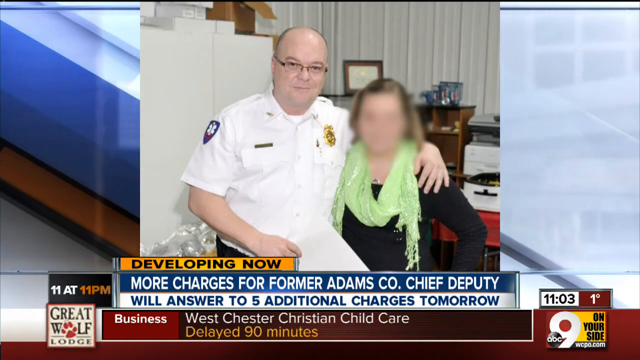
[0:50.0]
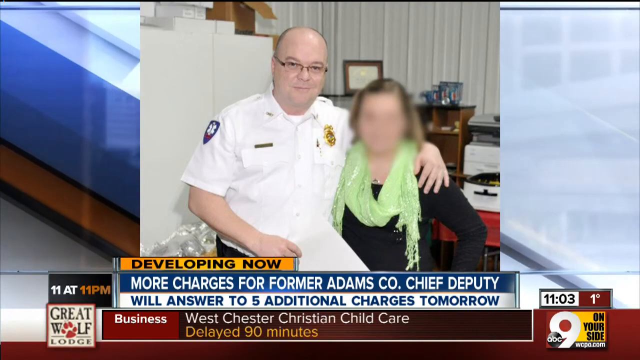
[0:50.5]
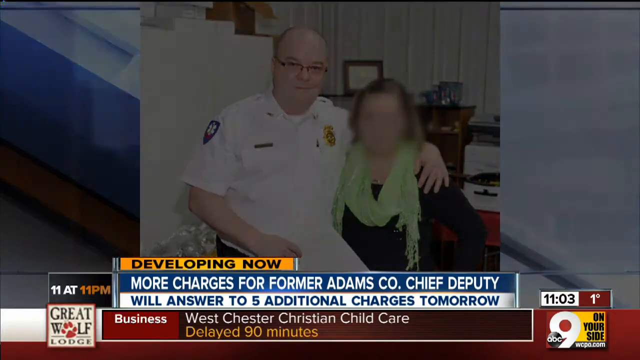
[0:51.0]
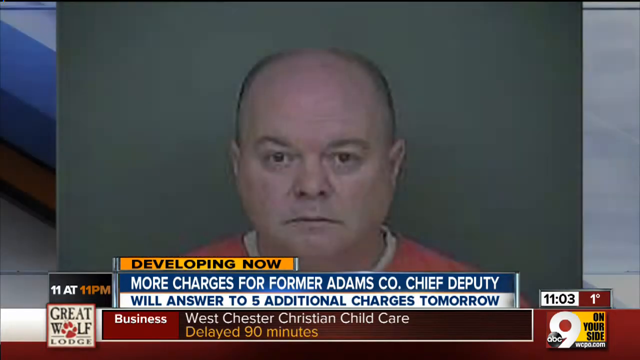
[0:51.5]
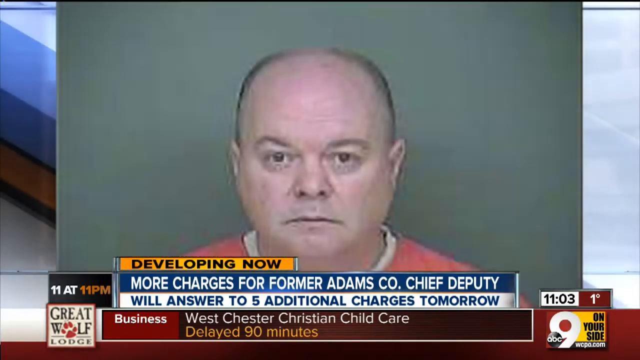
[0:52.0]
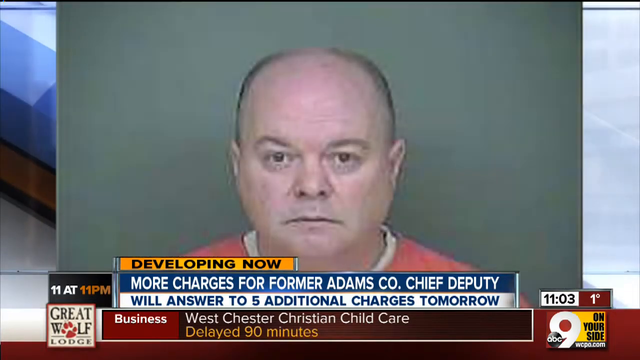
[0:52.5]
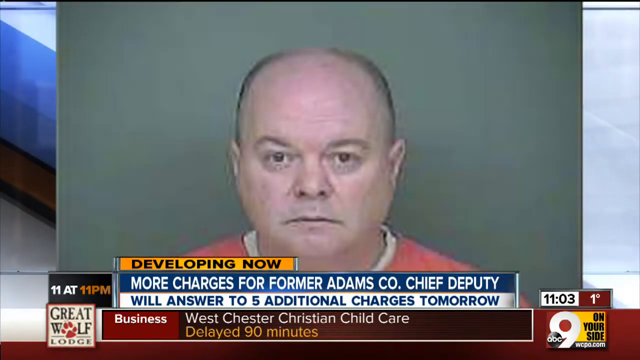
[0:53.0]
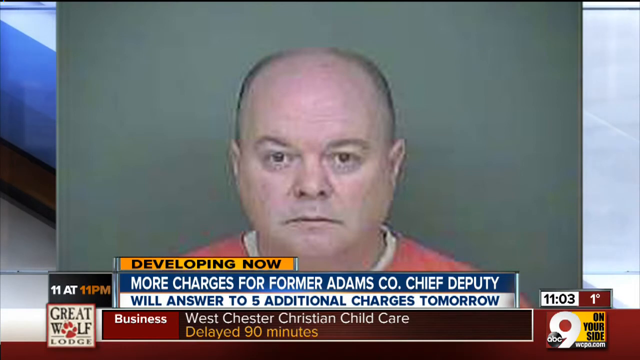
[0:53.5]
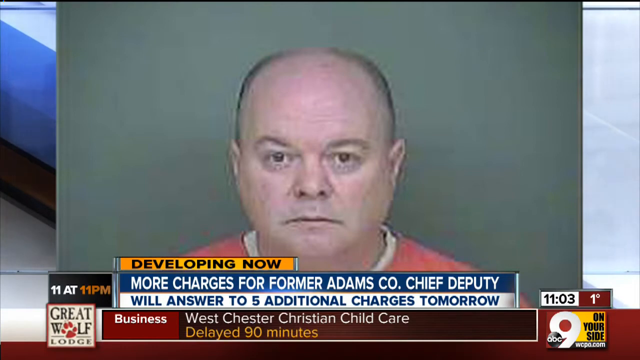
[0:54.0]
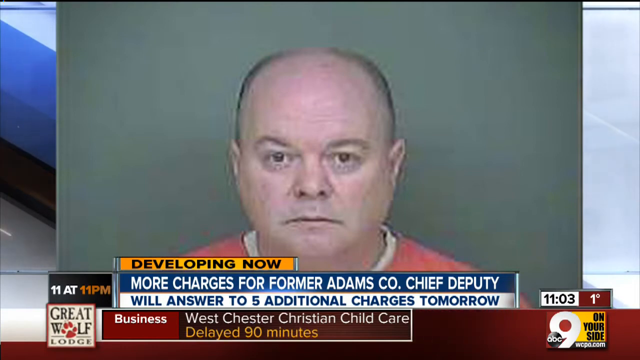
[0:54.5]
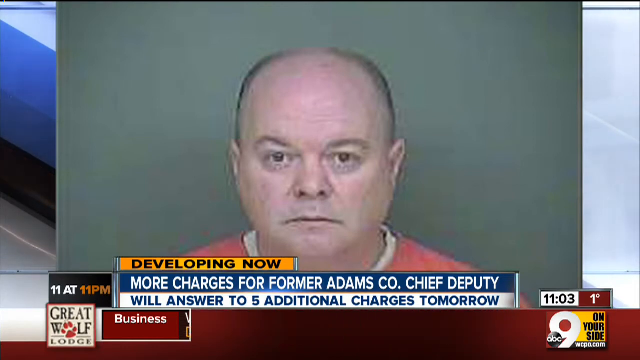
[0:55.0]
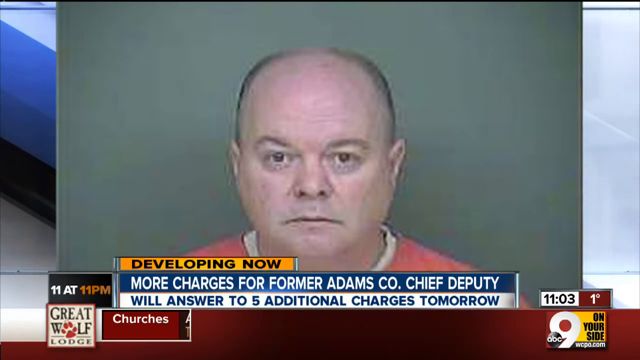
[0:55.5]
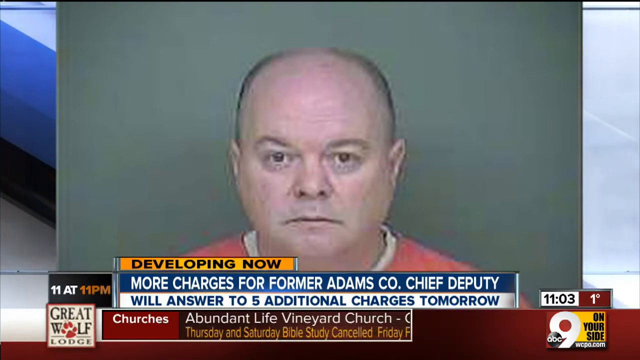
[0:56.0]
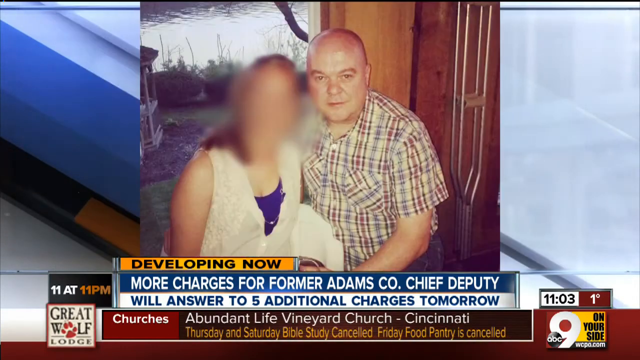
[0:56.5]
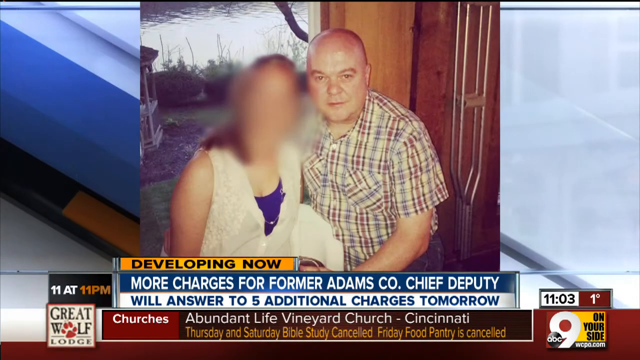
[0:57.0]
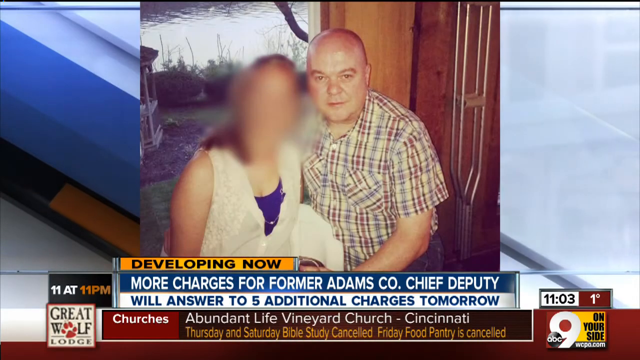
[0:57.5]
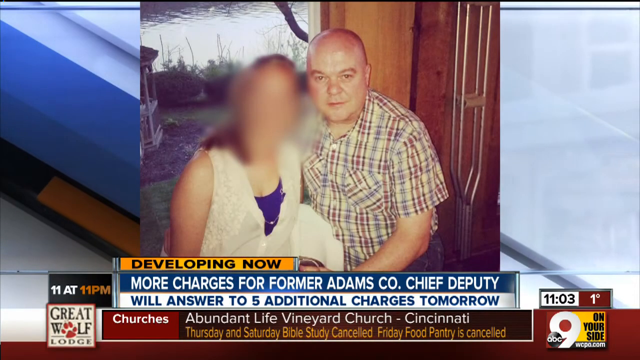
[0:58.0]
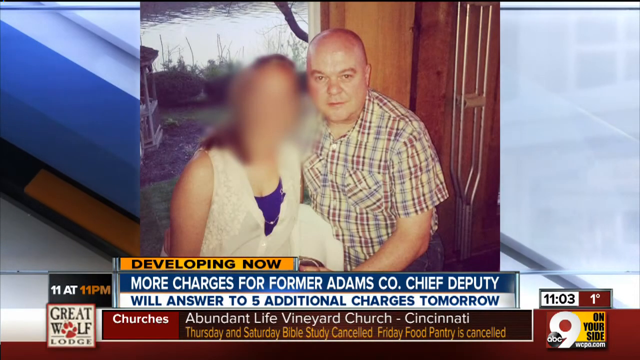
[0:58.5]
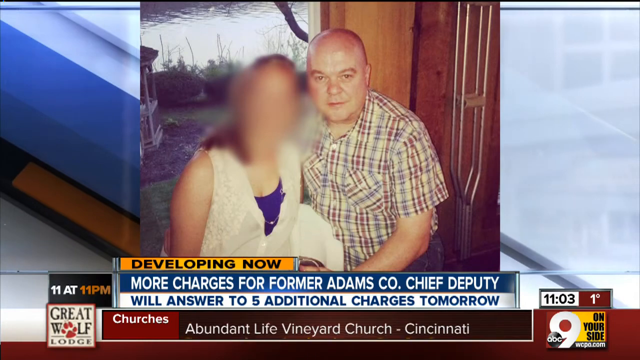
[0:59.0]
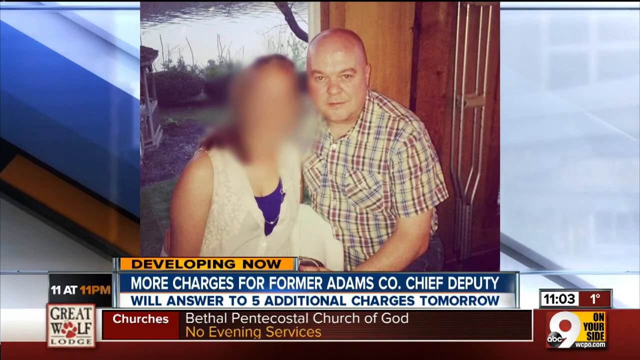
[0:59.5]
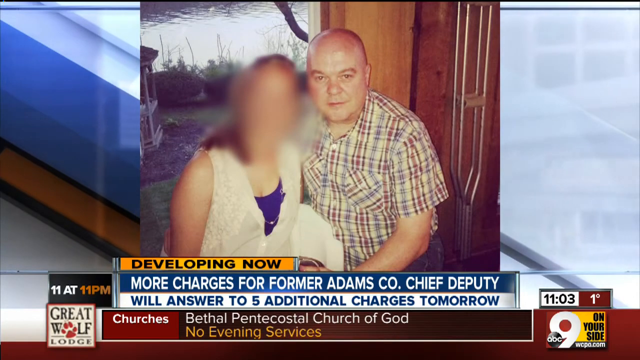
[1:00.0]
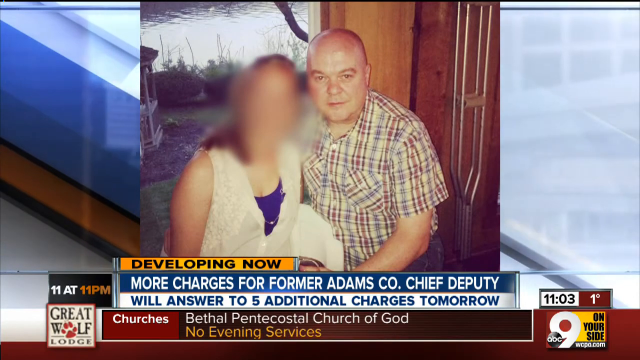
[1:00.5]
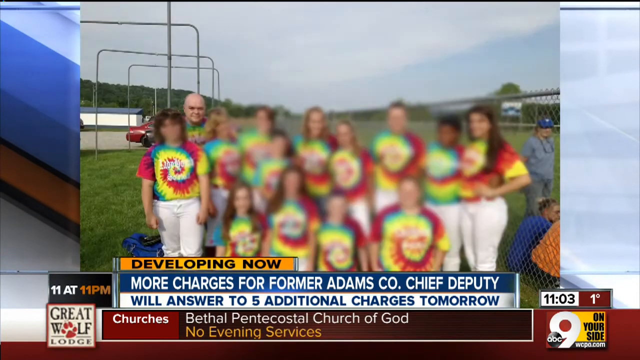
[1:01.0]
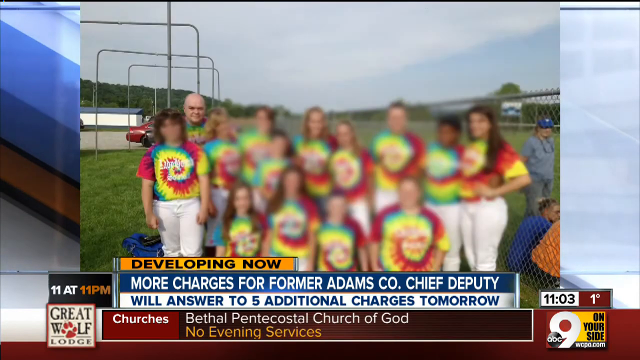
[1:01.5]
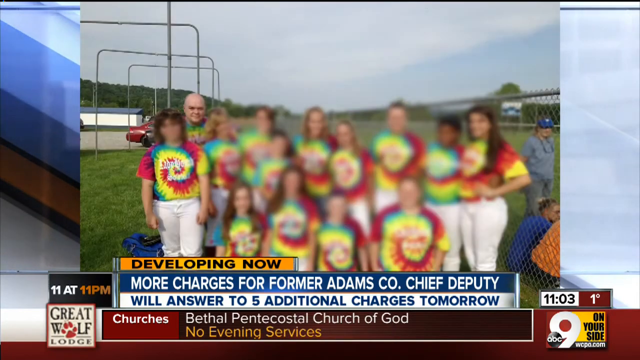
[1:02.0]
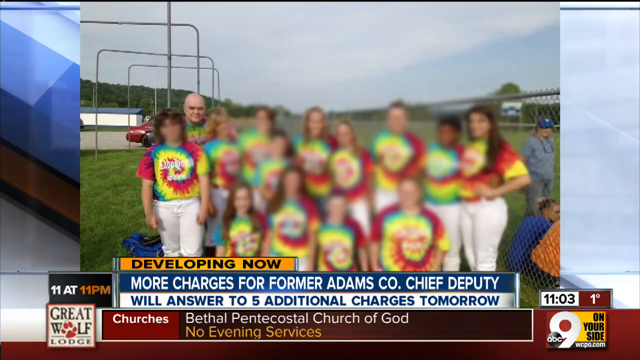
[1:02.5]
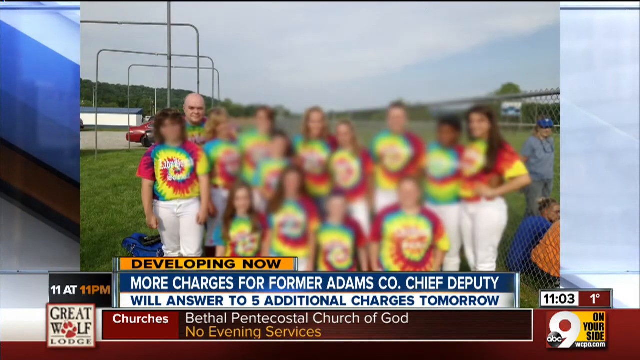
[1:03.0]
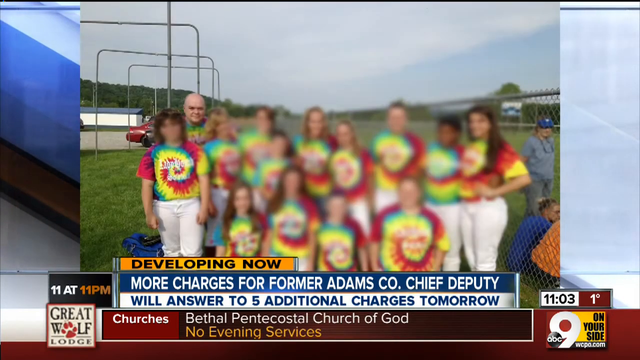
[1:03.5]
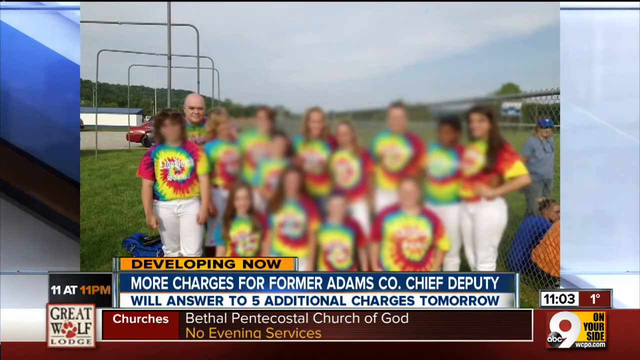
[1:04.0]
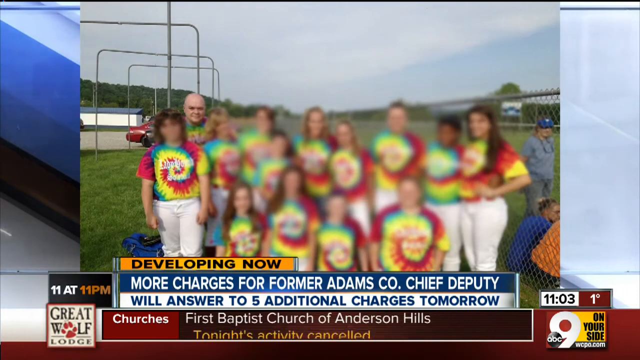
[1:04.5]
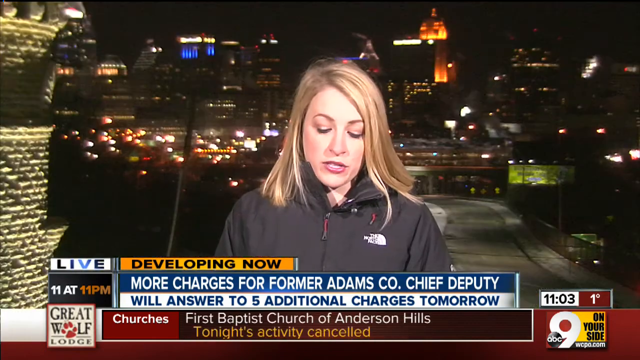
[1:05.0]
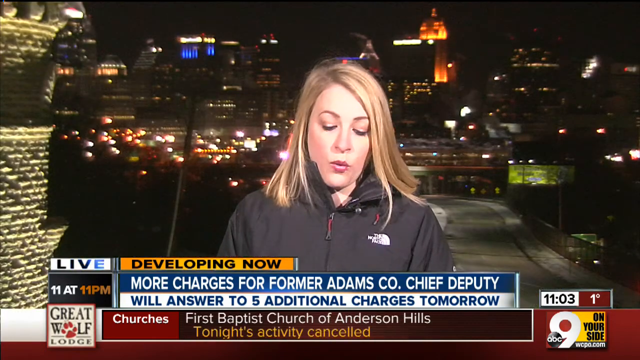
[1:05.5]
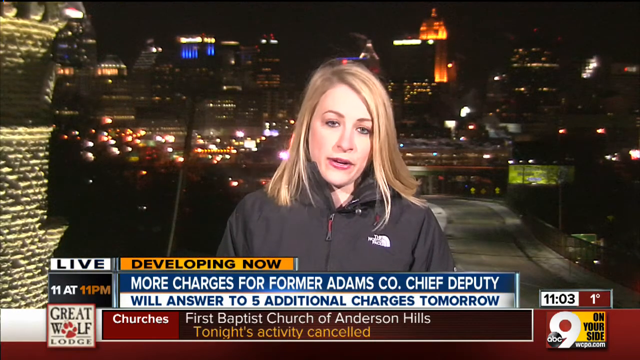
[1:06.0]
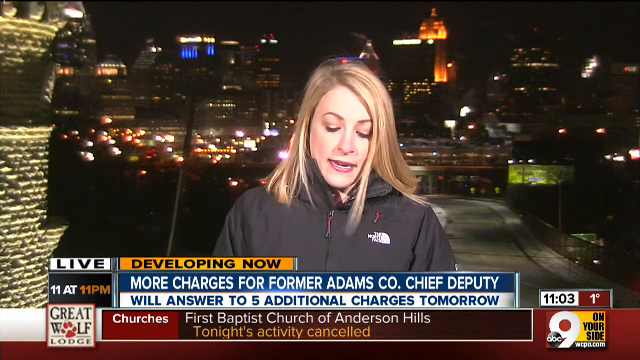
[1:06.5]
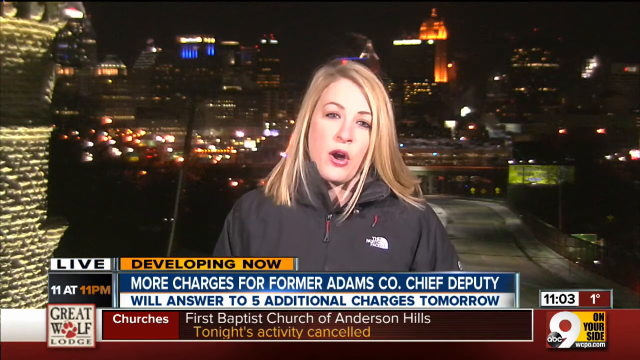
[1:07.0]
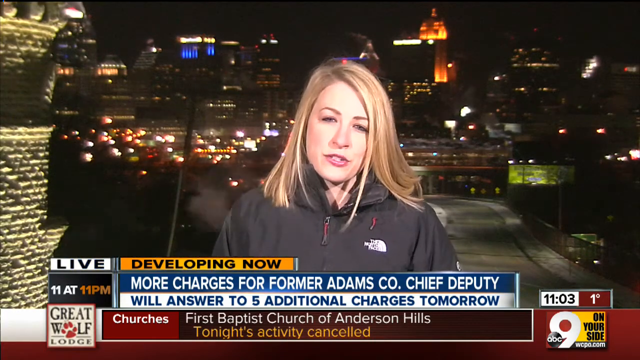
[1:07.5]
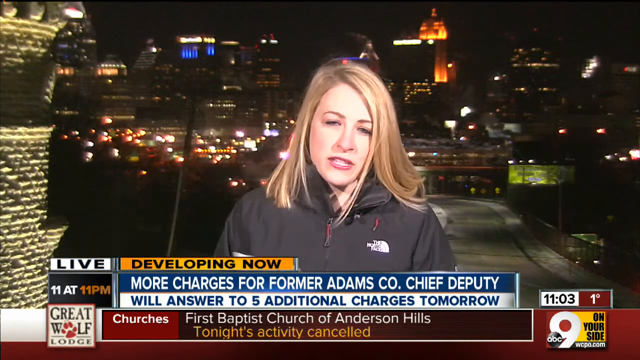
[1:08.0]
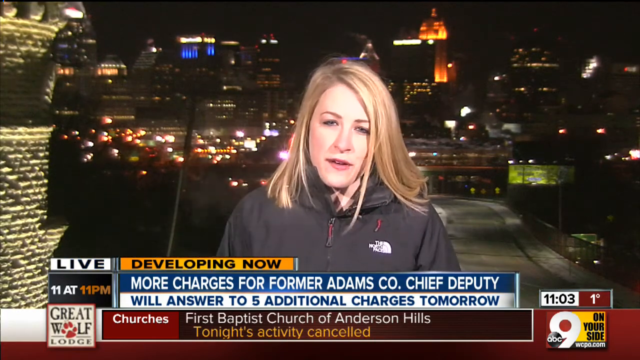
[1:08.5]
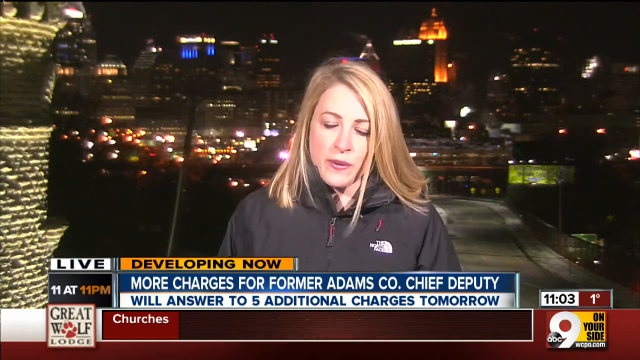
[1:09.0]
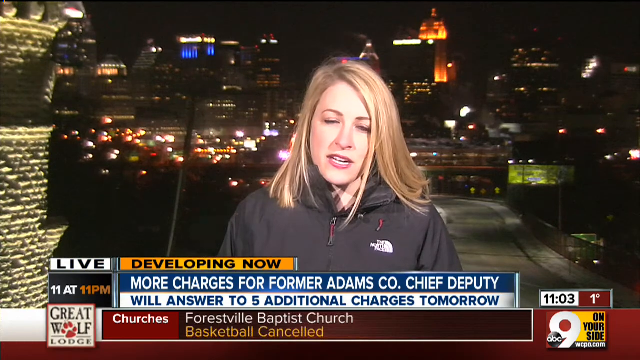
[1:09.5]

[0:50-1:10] A picture shows a man in a police uniform with a white shirt with his left hand on a woman on the right, who wears a green scarf and a black t-shirt. The "developing now" banner at the bottom says "more charges for former Adams" chief deputy, "will answer to five additional charges tomorrow." The ticker shows a Westchester child care delayed 90 minutes. A mugshot of the man appears. Another picture shows him with a different woman; this time the woman is on the left and the man is on the right, and she wears a blue undershirt and a white coat. Later, the man poses in front of a picture of many young girls. The broadcast then returns to the reporter with blonde hair.